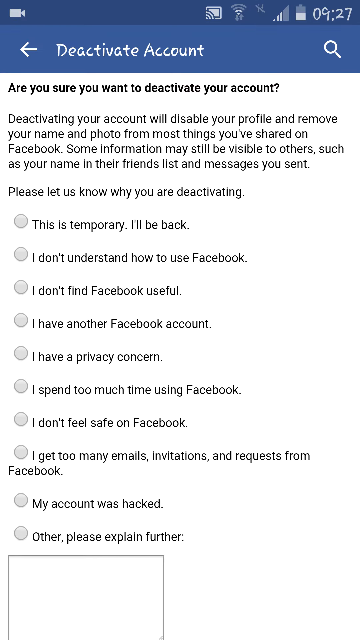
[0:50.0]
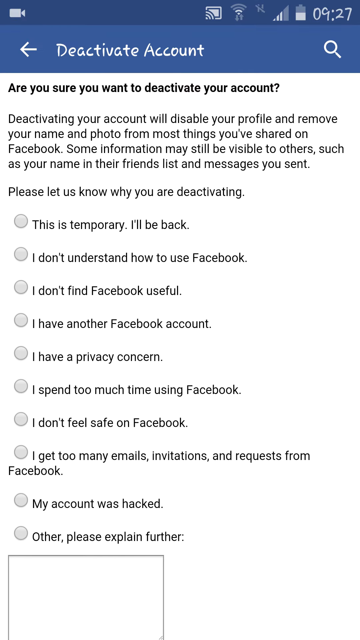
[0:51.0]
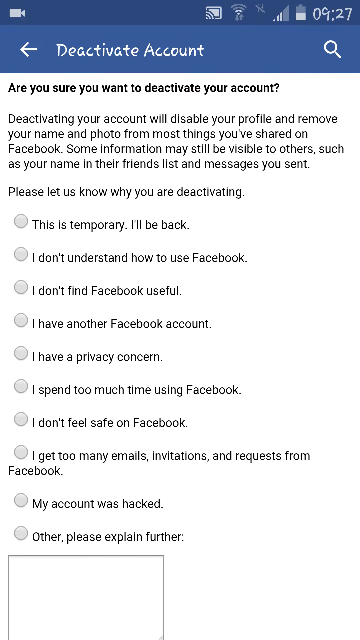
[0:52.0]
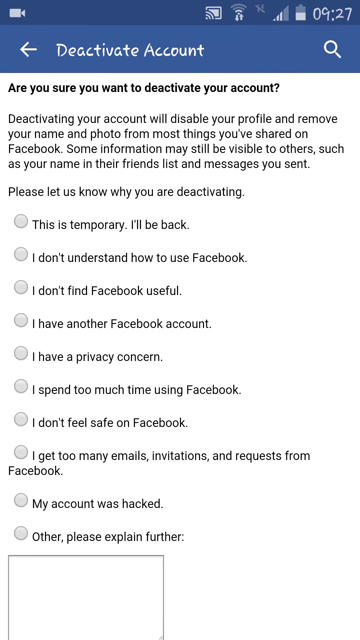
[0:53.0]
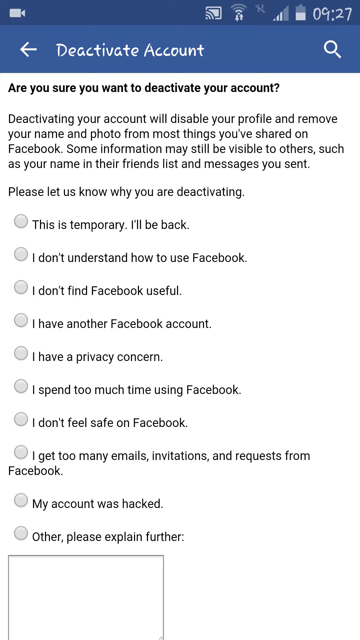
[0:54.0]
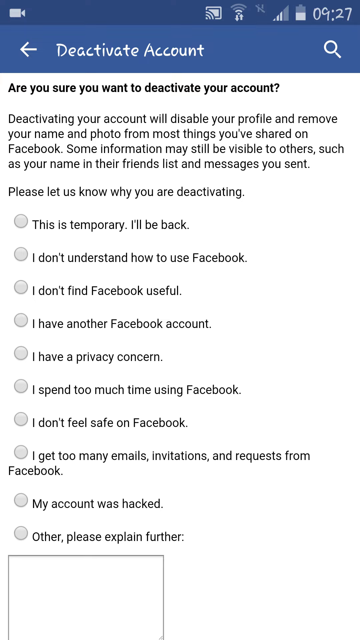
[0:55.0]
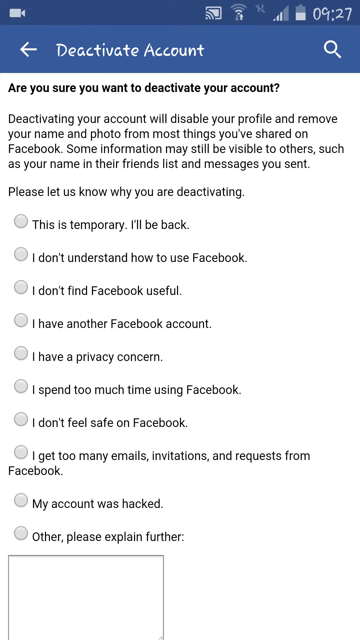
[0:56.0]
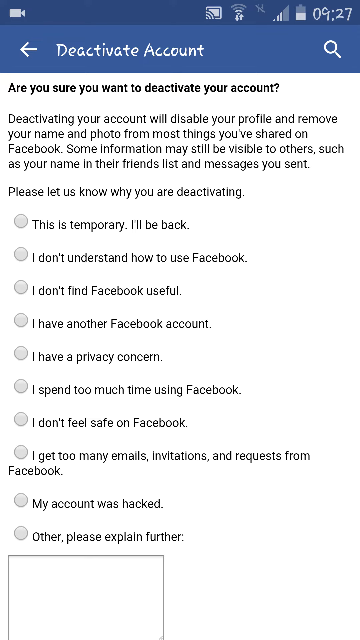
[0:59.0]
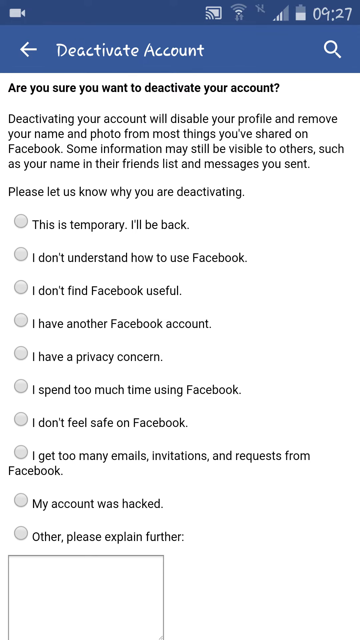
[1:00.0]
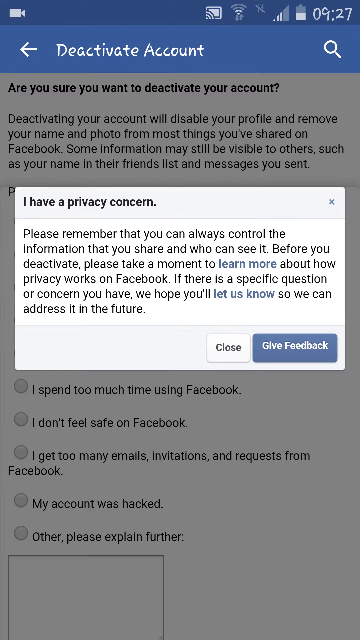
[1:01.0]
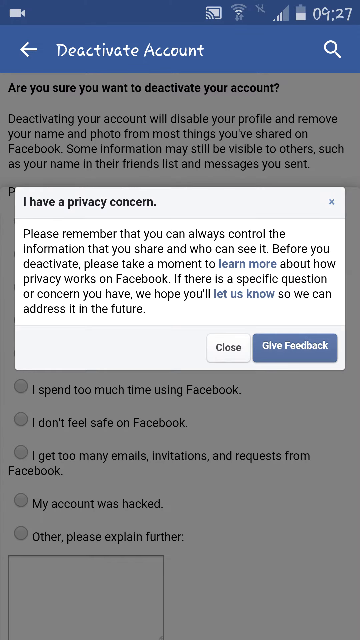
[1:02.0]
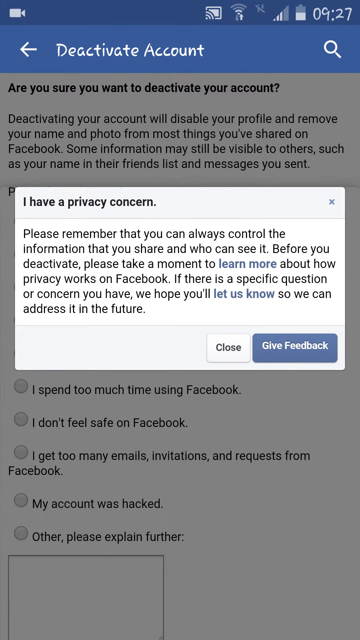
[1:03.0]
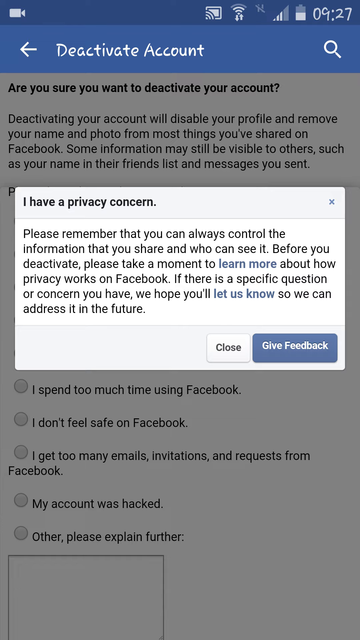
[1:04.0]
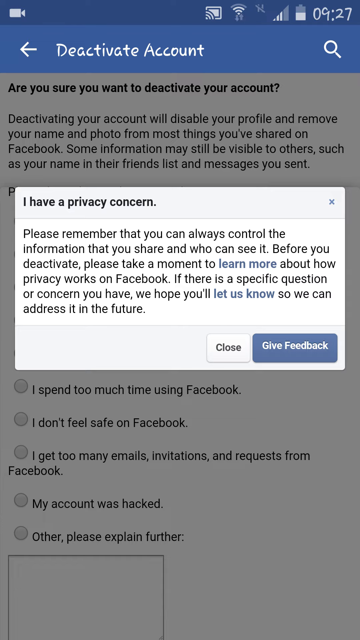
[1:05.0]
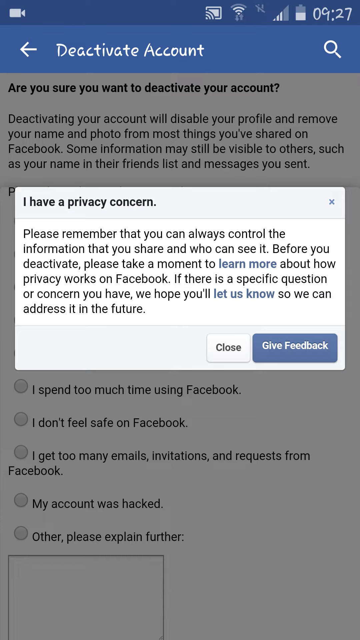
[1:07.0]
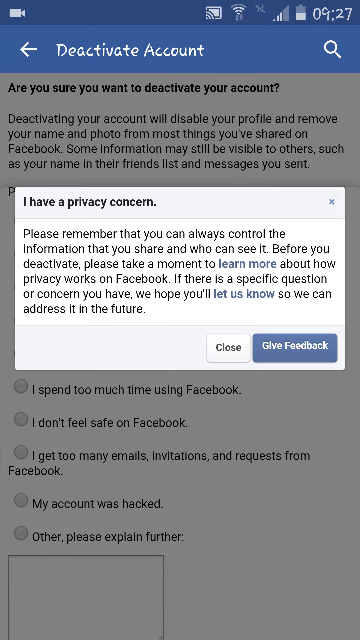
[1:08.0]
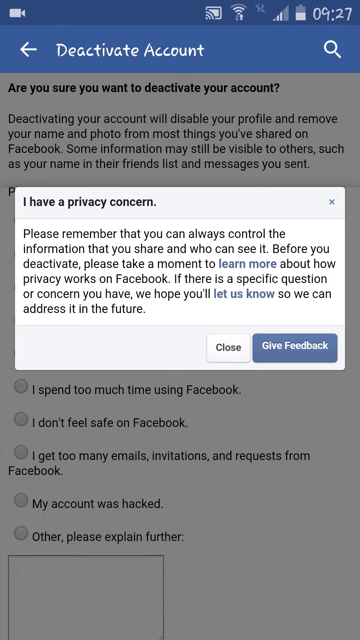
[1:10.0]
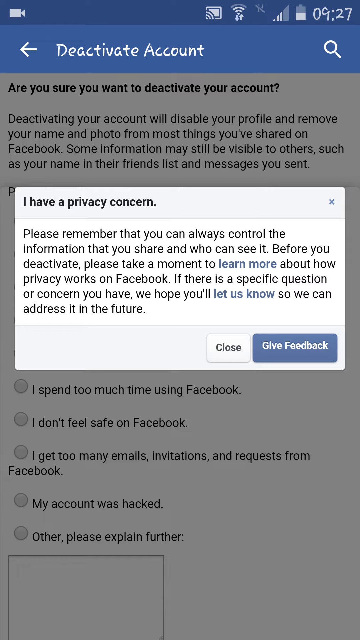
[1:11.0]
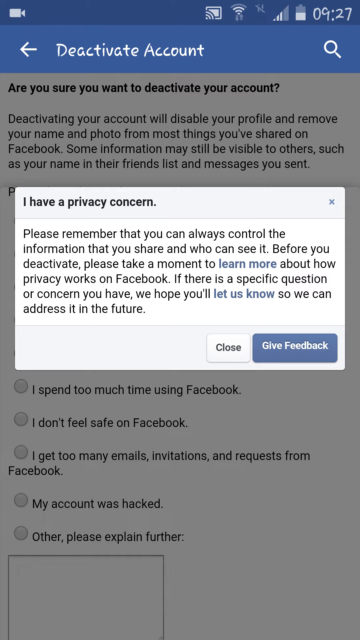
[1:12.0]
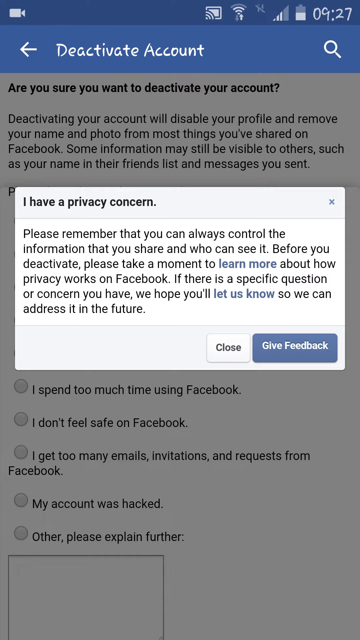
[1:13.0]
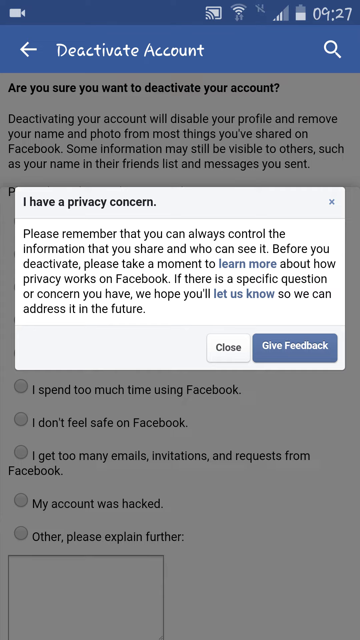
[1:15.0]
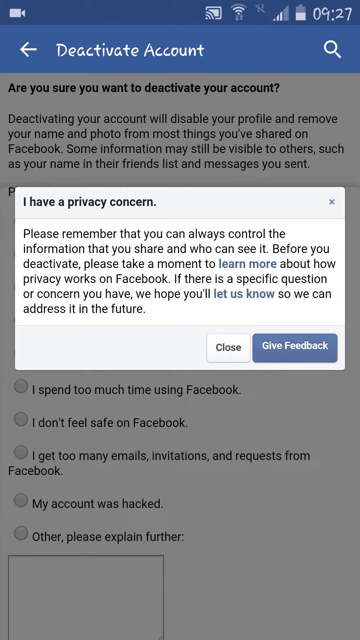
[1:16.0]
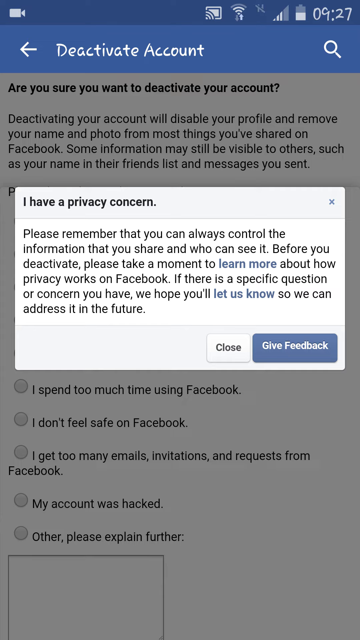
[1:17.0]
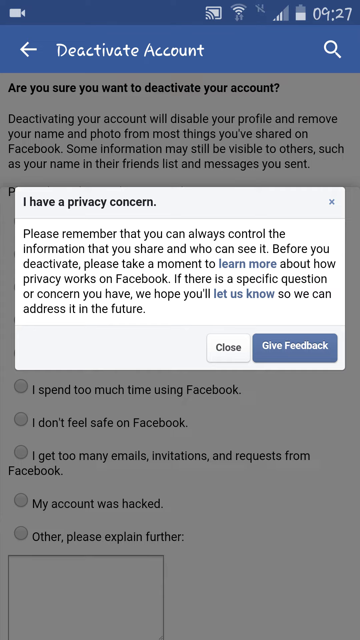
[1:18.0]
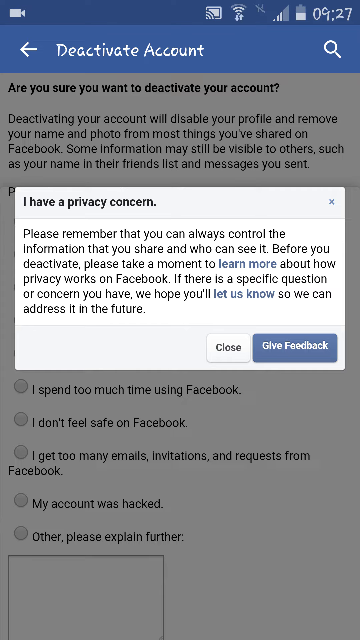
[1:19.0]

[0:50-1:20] The deactivate account section of the Facebook app is shown on a cell phone as someone tries to deactivate their account. At the very top it says "deactivate account". Underneath it says "are you sure you want to deactivate your account? Deactivating your account will disable your profile and remove your name and photo from most things you've shared on Facebook. Some information may still be visible to others, such as your name in their friends list and messages you sent. Please let us know why you're deactivating." Below are many reasons for deactivating, each with a radio button, and at the very bottom a small box for writing another option to explain further. The screen stays there for a while. Then the person seems to select "I have a privacy concern", and text appears saying "please remember that you can always control the information that you share and who can see it before you deactivate. Please take a moment to learn more about how privacy works on Facebook. If there's a specific question or concern you have, we hope you let us know." Below that are a close button and a give feedback button. The screen stays on that section for a while, with the person apparently reading the text under "I have a privacy concern". Then it goes back to the previous deactivate account screen.